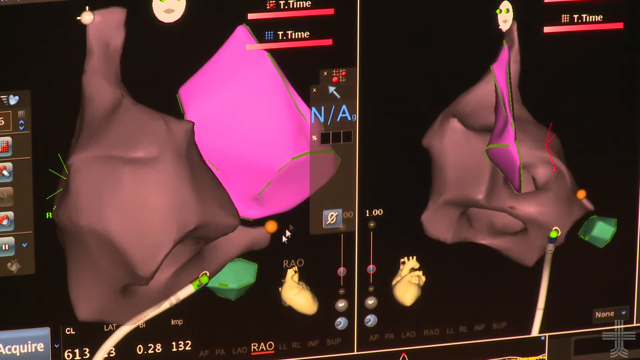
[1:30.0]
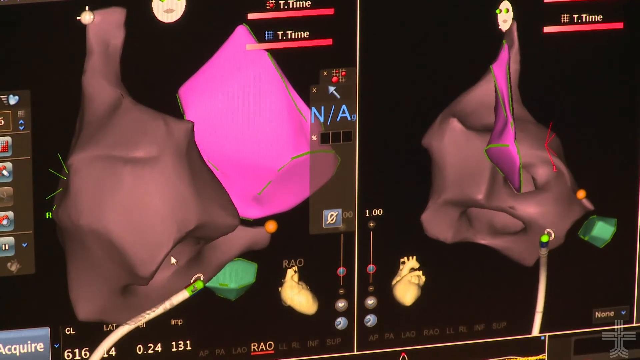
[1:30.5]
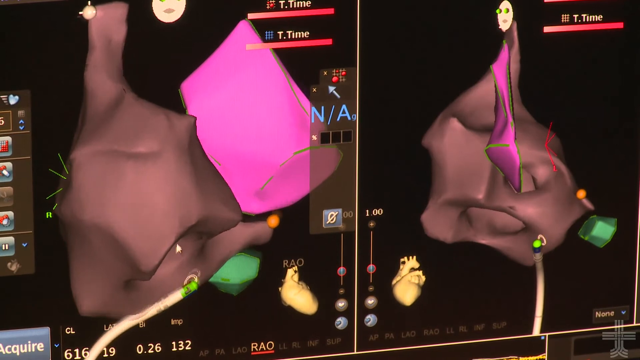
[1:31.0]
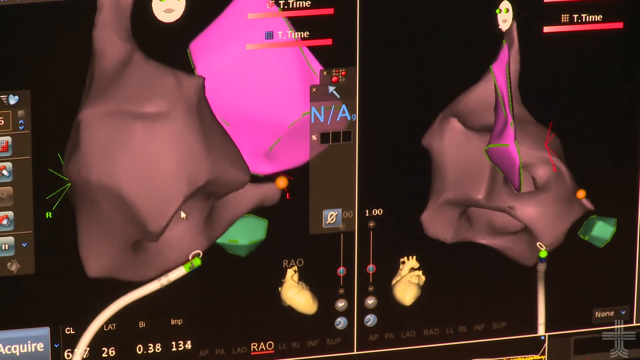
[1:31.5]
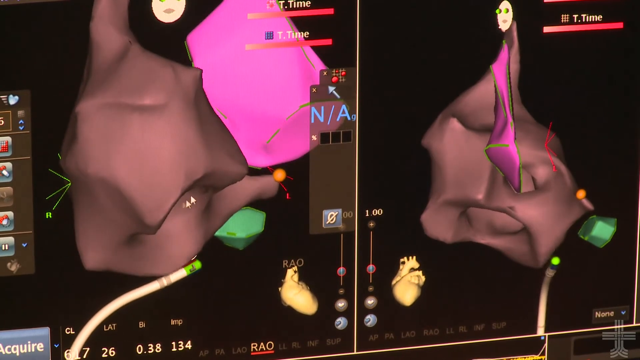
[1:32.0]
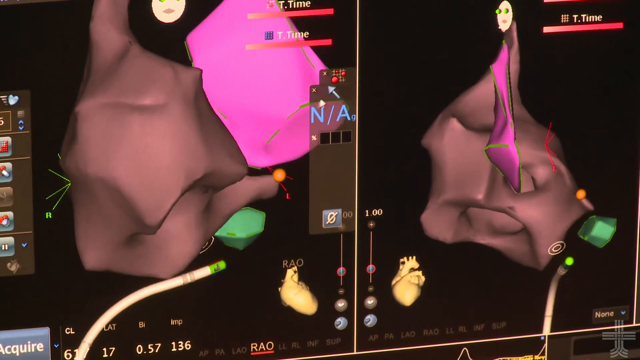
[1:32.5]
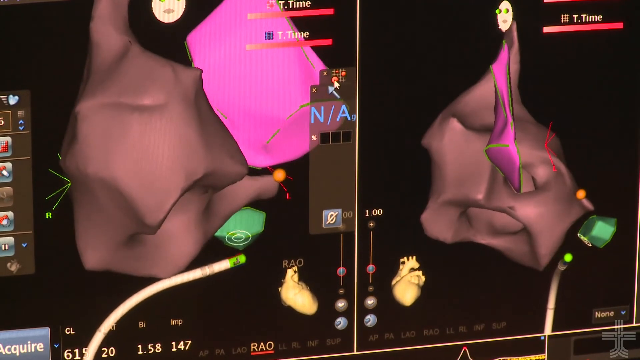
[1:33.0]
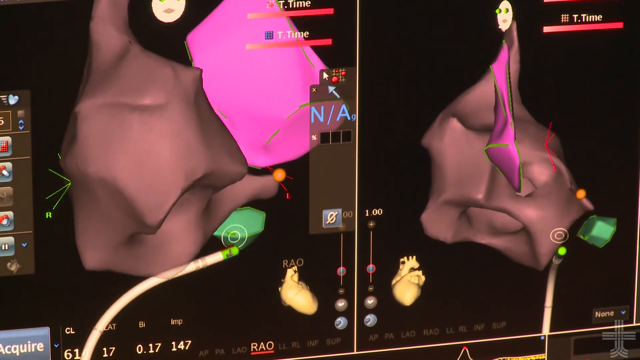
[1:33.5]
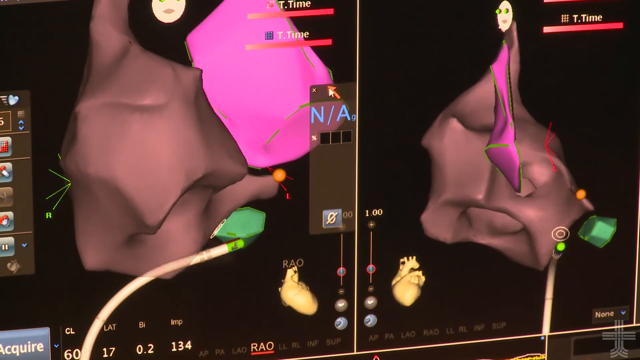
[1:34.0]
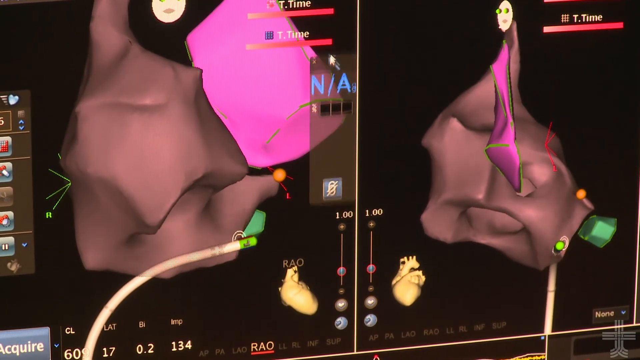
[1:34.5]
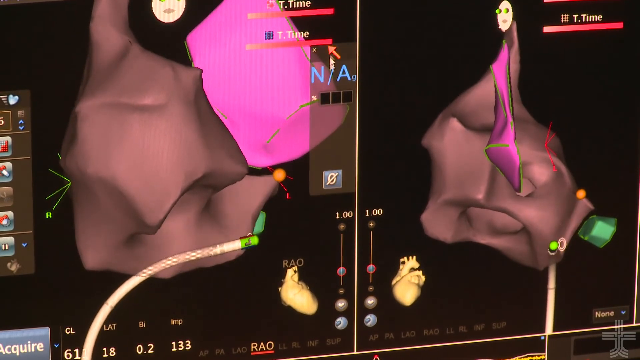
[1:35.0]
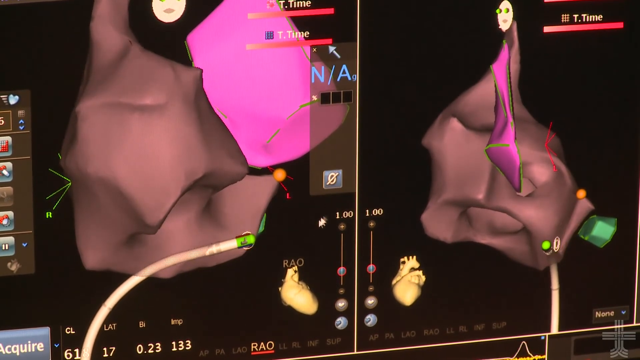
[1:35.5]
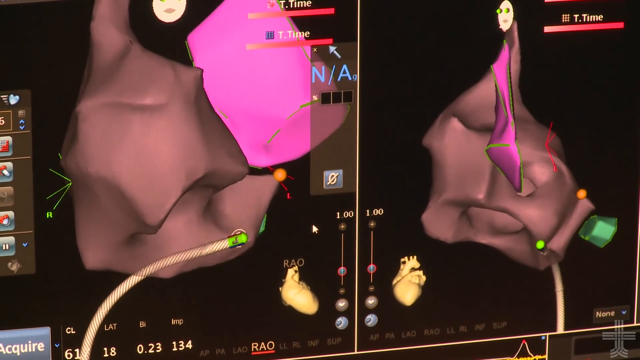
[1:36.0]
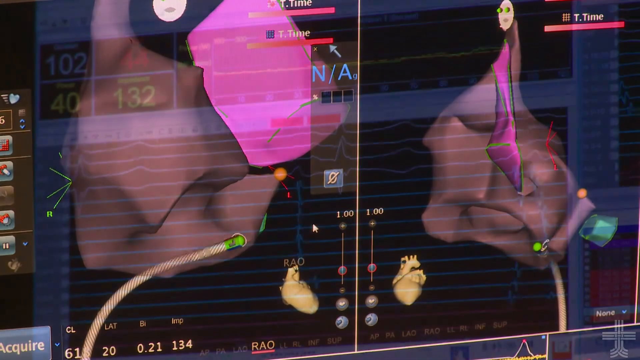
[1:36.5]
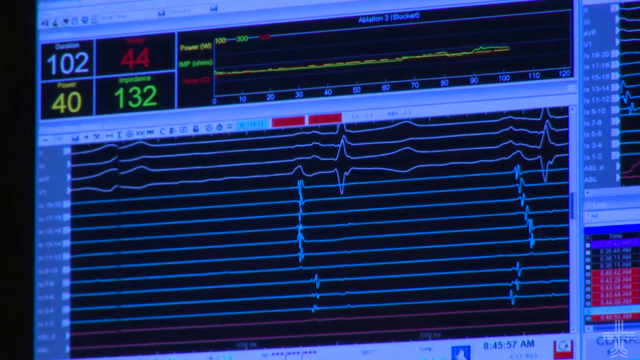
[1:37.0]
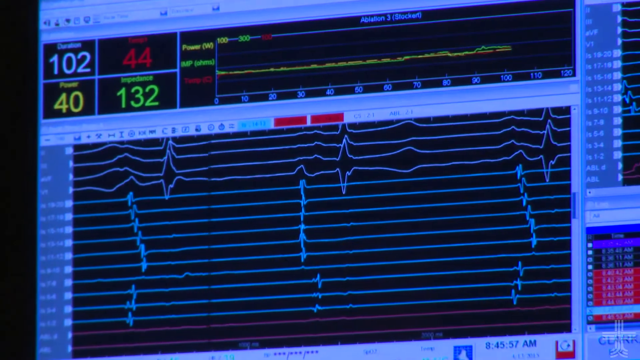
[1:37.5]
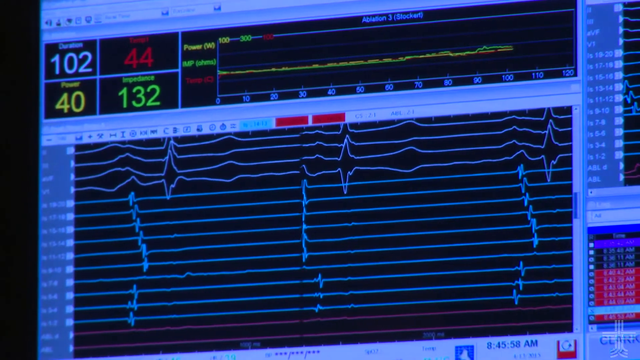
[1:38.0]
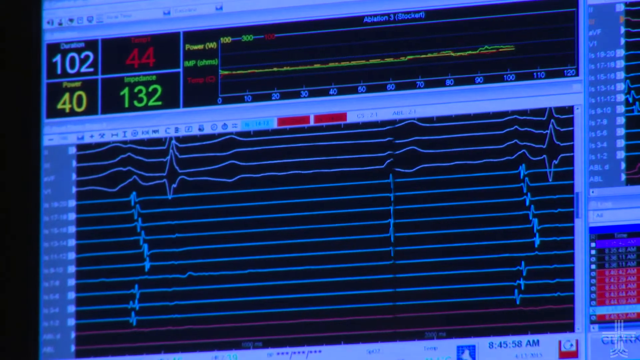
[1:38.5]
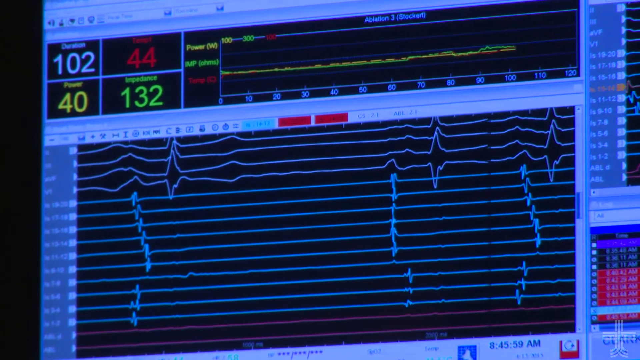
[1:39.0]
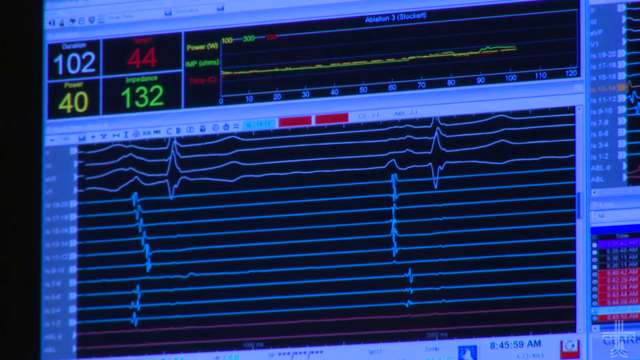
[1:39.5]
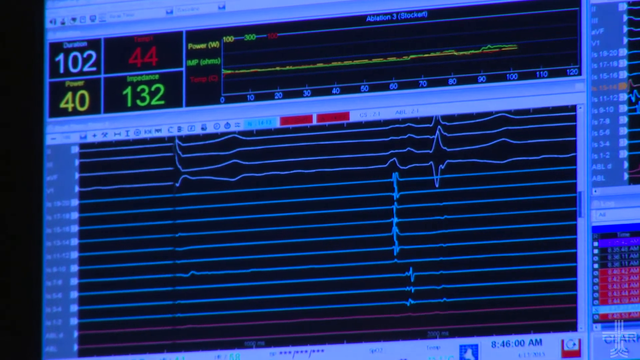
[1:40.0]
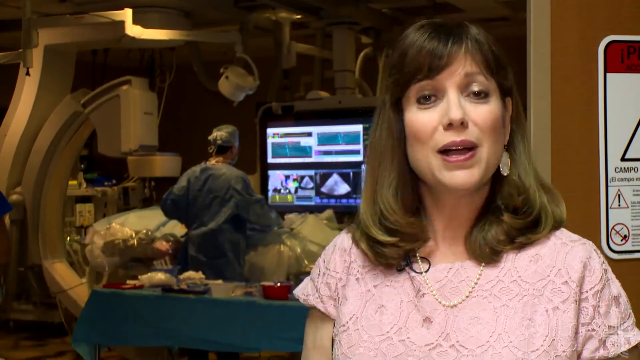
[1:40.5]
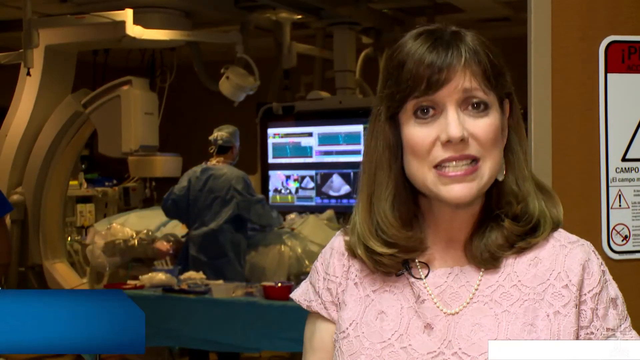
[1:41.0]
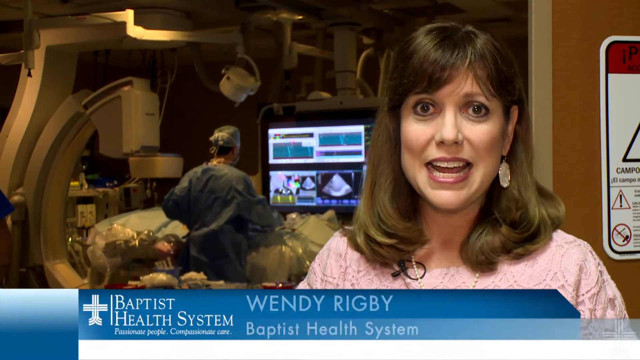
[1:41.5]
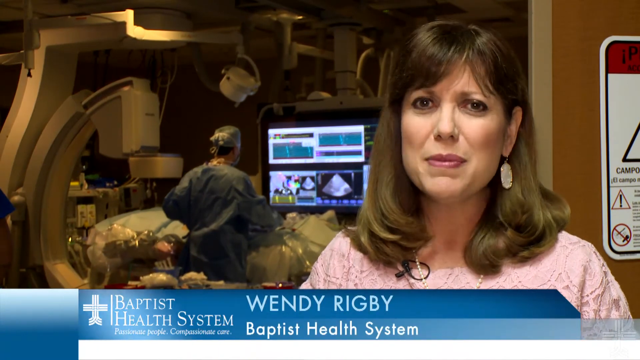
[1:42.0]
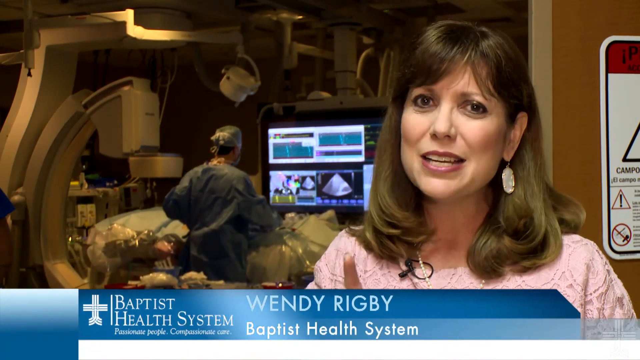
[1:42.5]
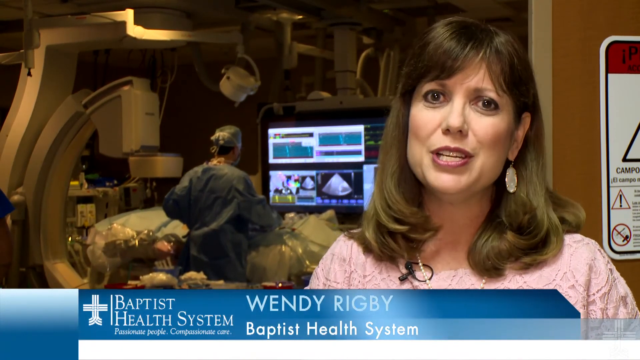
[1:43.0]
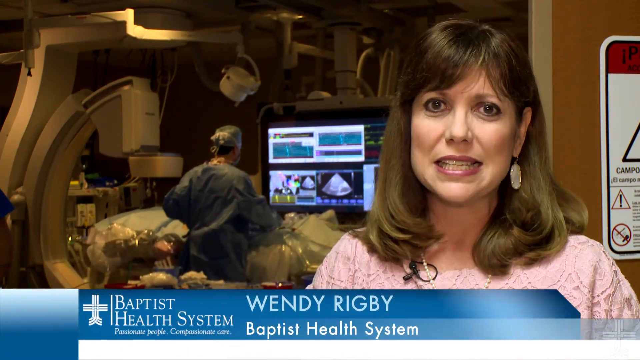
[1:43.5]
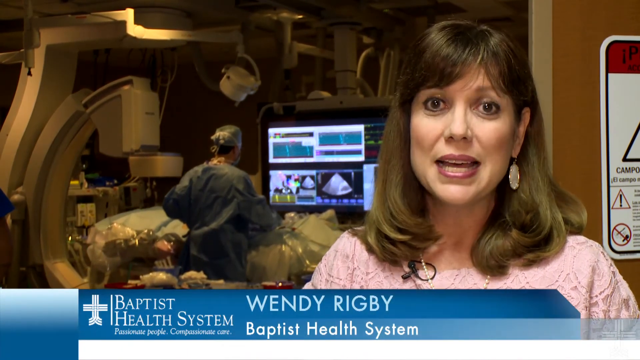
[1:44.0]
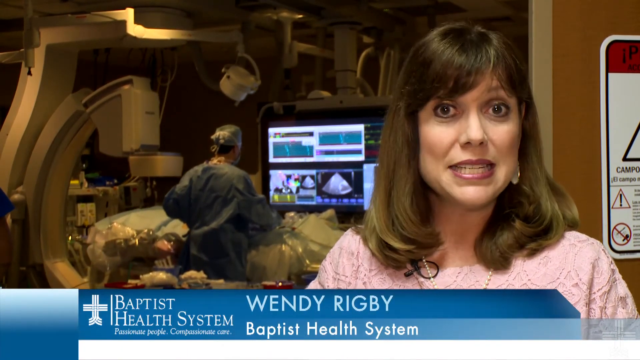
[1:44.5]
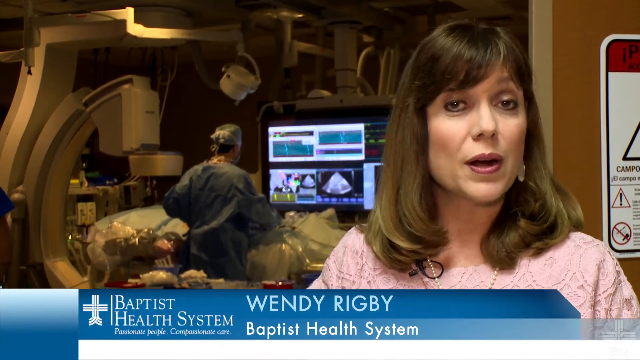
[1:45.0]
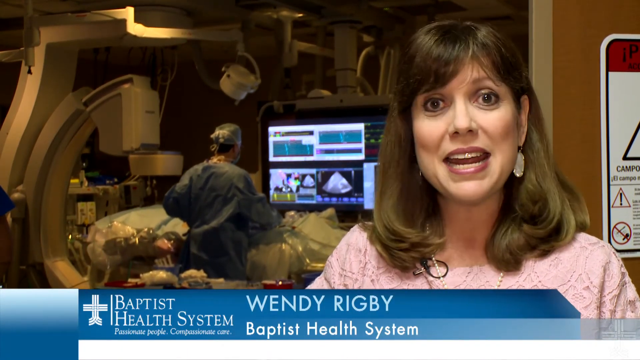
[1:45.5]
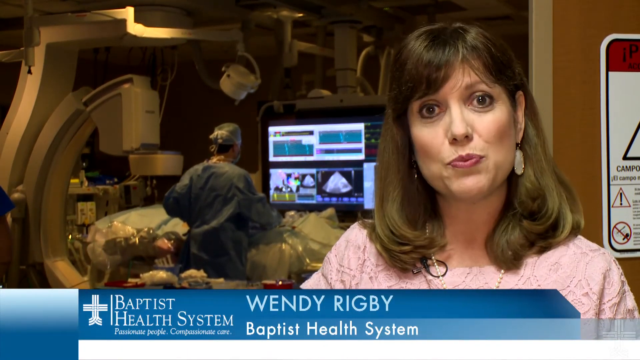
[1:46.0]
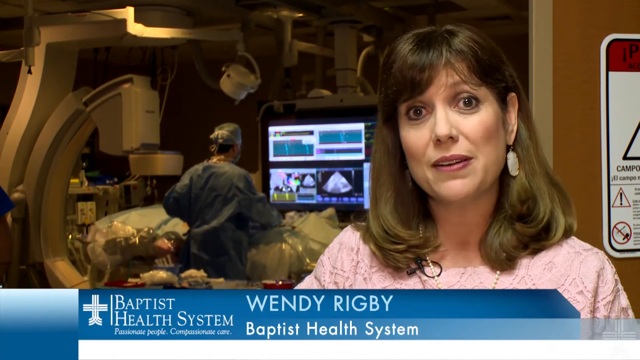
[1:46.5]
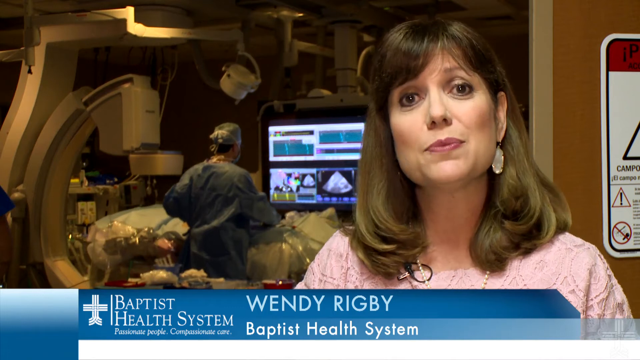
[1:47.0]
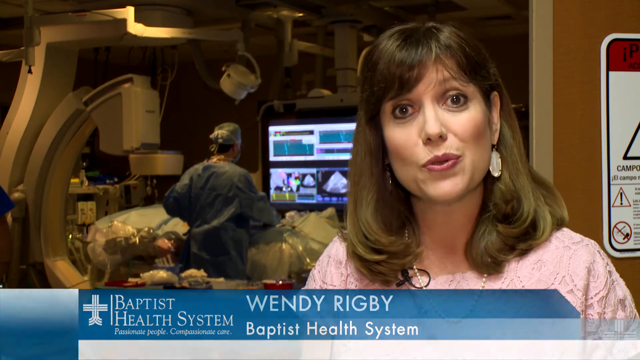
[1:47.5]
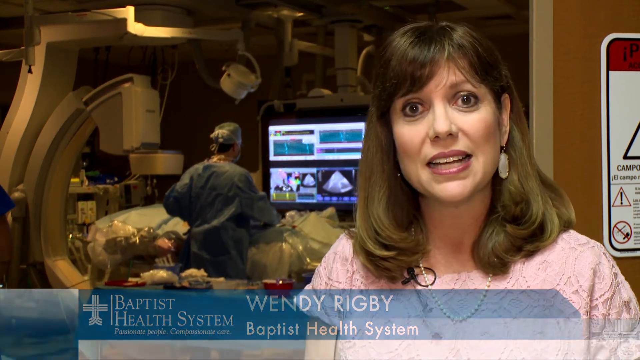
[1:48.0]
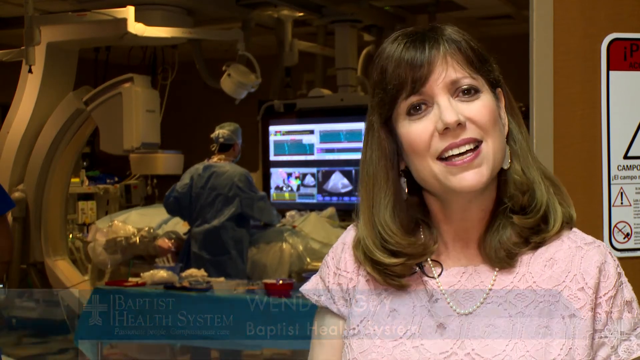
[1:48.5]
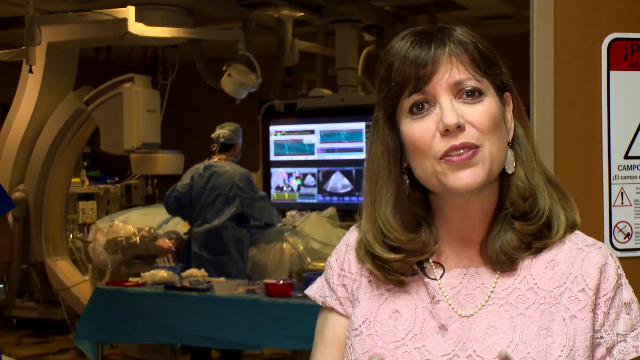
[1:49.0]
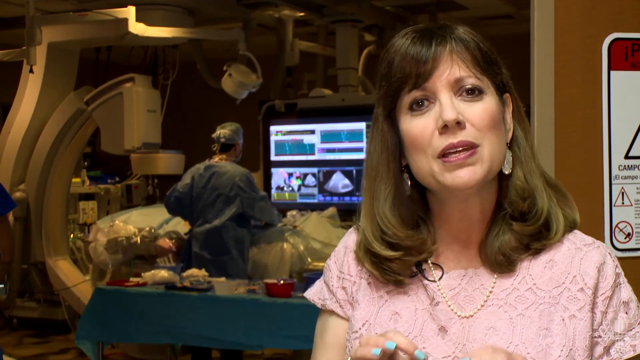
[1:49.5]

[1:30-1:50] The 3D rendering of the inside of the patient is on the screen. What is probably the heart appears in an off-tannish pink color, with a bright pink piece in it as well. The electrode comes in with a bright green end, and the doctor moves it, touching certain parts; where it touches, the area expands. Part of a heart monitor shows the various beats of the heart. The video then changes to a woman standing outside the procedure room. She wears a pink shirt that looks like it has a lacy design, pearls around her neck and long earrings, and has shoulder-length dirty blonde or light brown hair, mascara and off-pink lipstick. Her name is Wendy Rigby, and she works for Baptist Health System; she appears to be describing the procedure or the types of procedures available at the facility. In the background a doctor works on a patient, apparently the same doctor seen earlier.